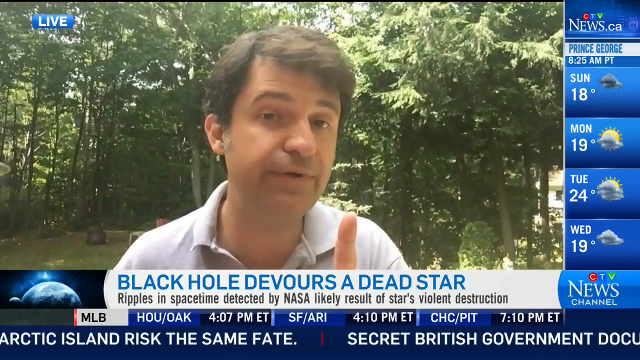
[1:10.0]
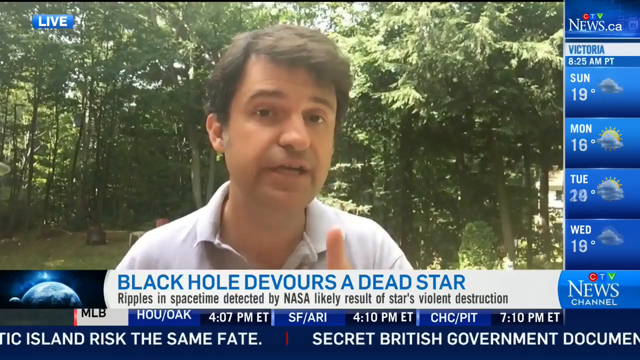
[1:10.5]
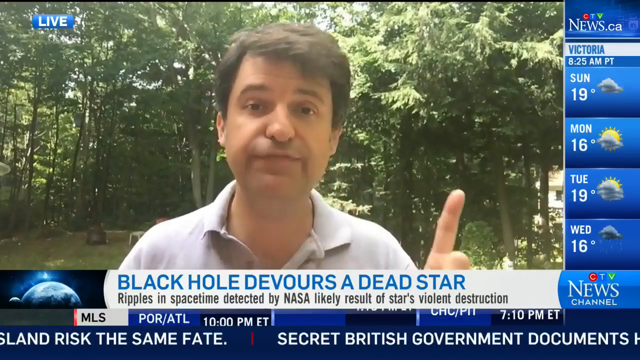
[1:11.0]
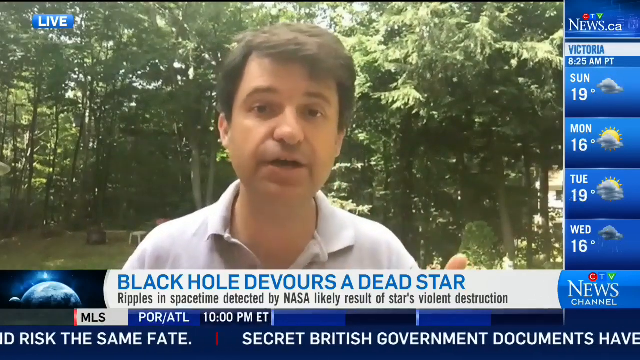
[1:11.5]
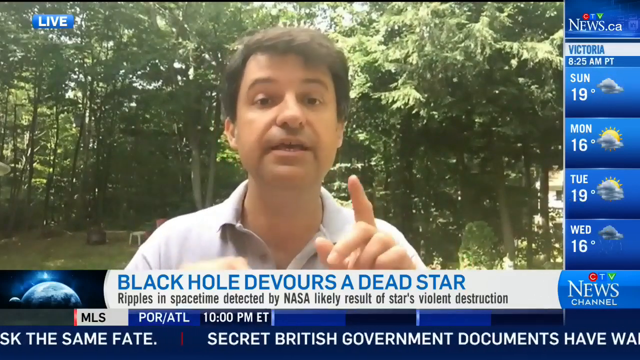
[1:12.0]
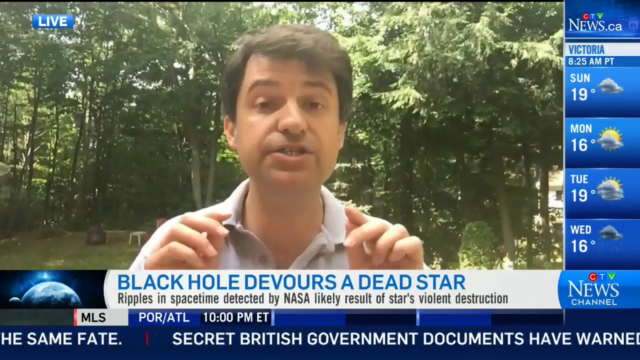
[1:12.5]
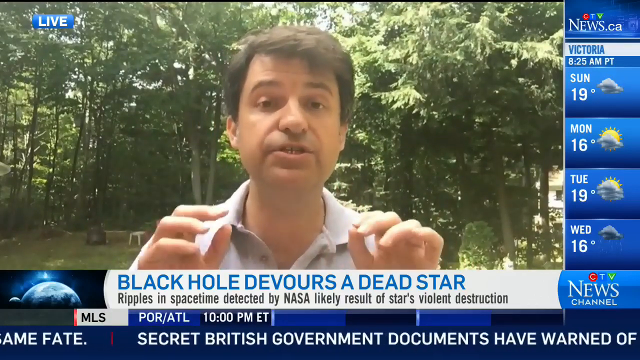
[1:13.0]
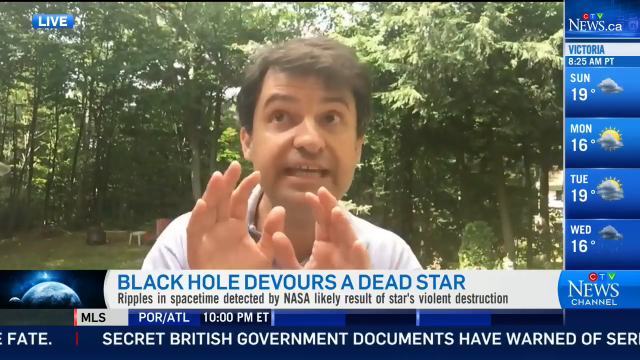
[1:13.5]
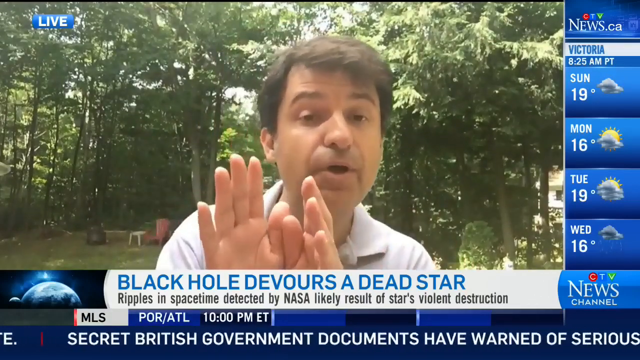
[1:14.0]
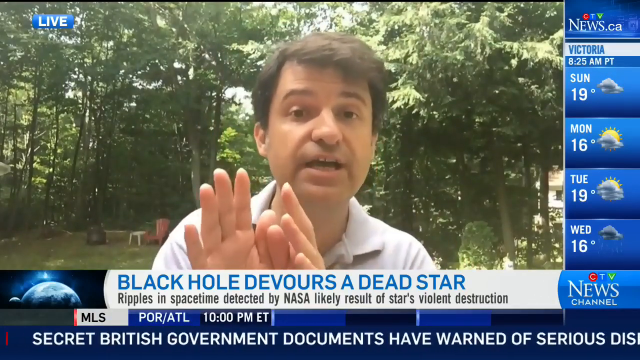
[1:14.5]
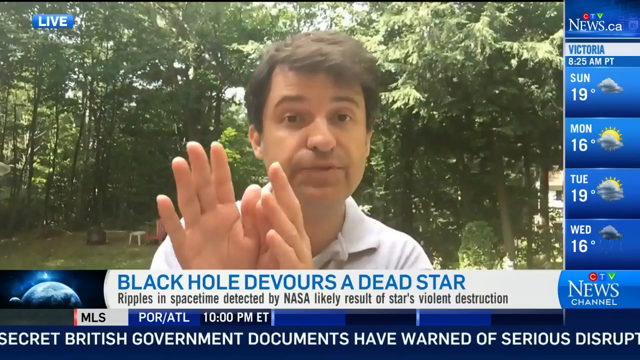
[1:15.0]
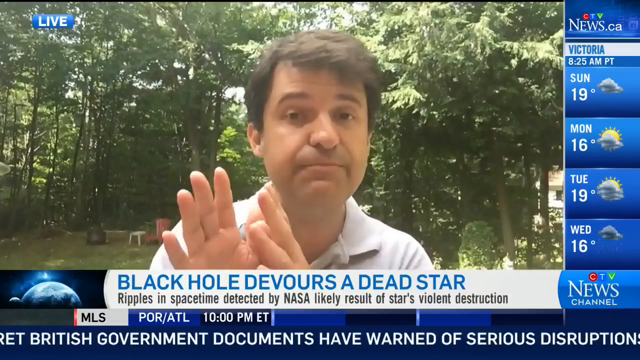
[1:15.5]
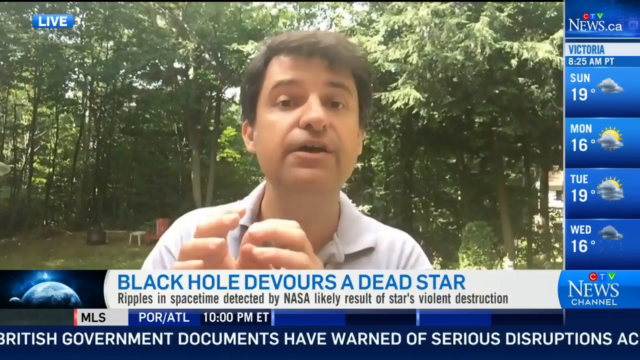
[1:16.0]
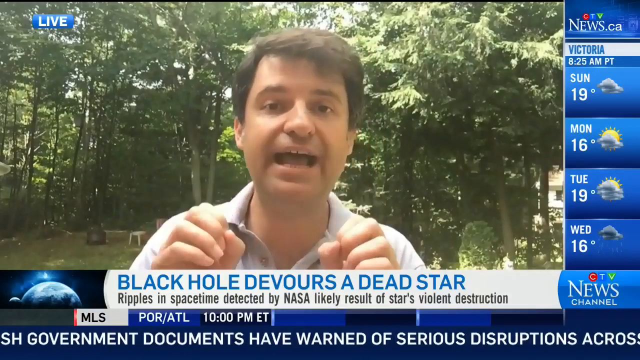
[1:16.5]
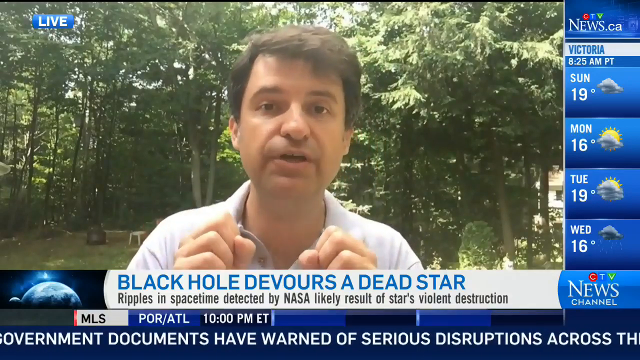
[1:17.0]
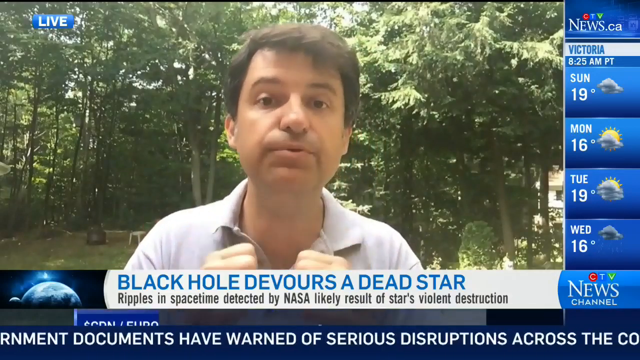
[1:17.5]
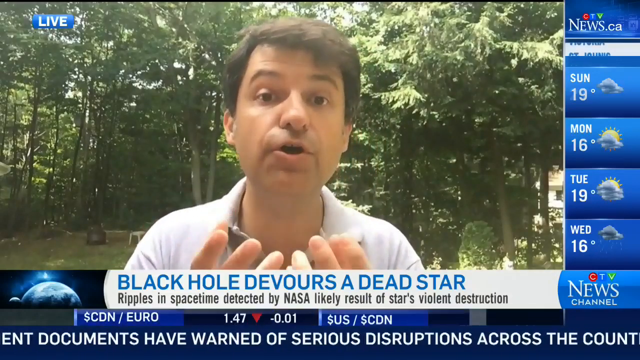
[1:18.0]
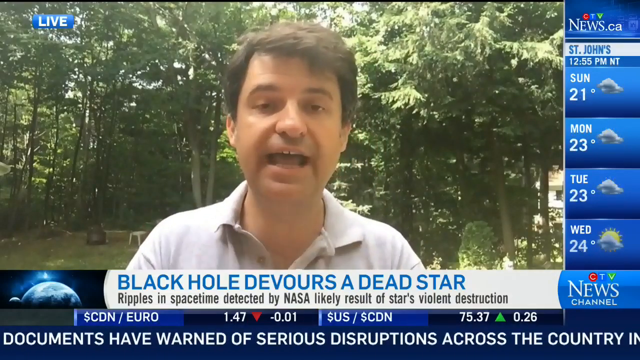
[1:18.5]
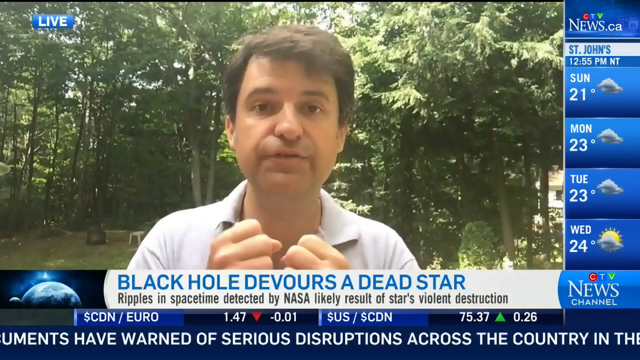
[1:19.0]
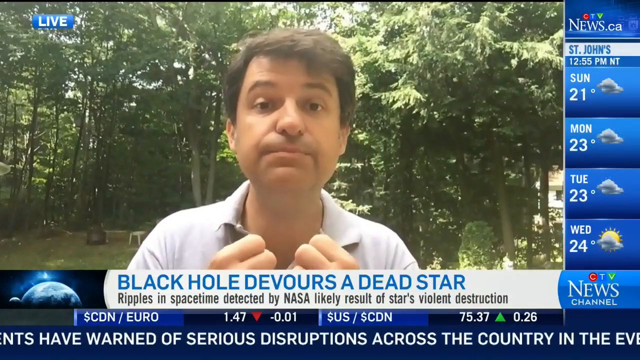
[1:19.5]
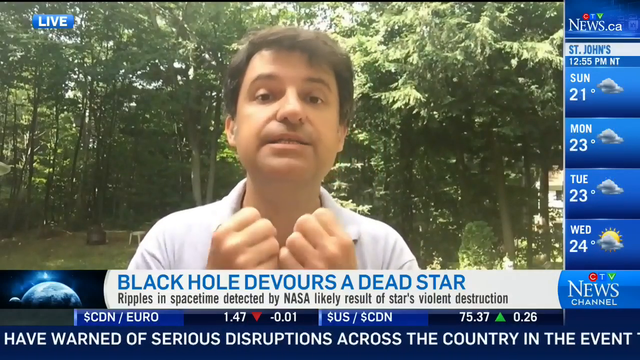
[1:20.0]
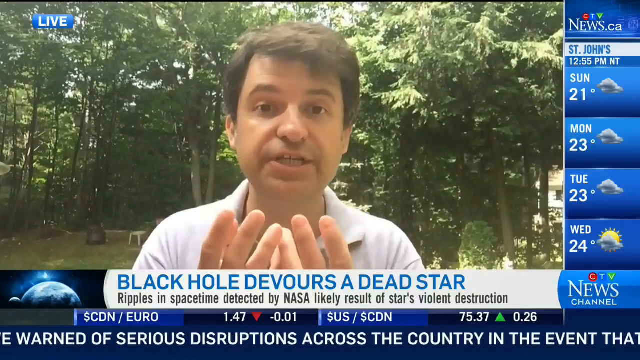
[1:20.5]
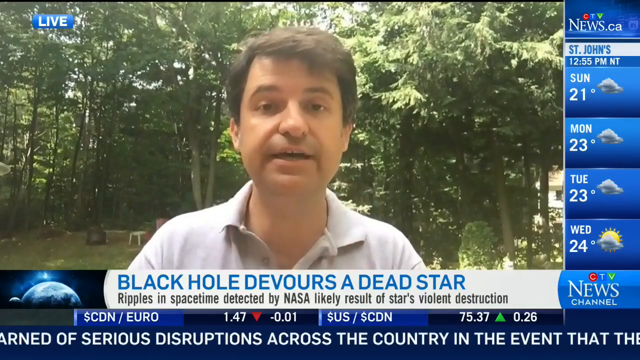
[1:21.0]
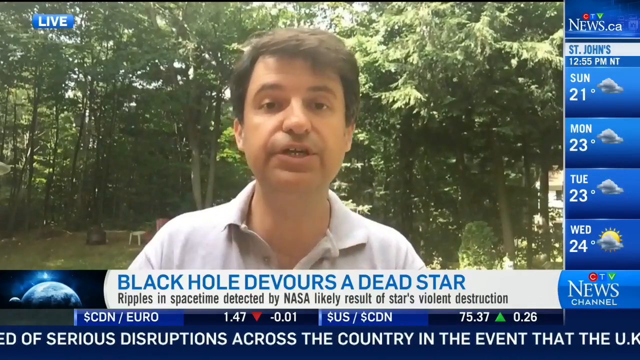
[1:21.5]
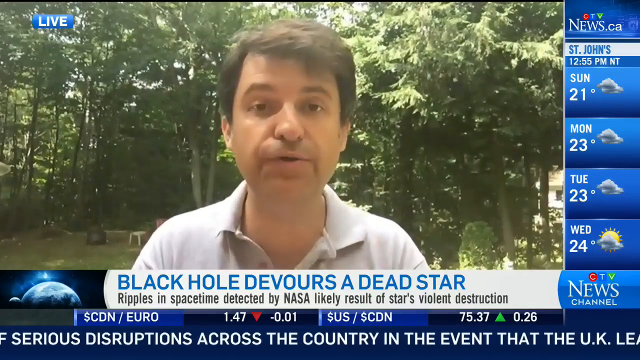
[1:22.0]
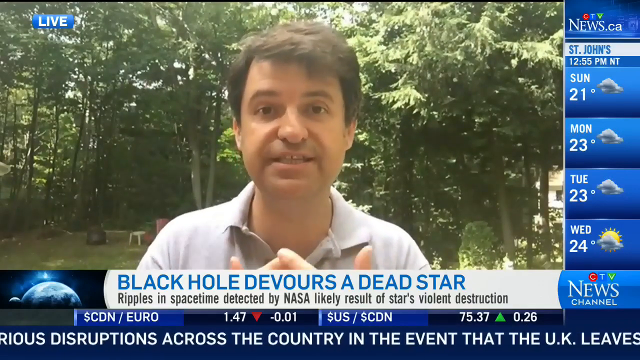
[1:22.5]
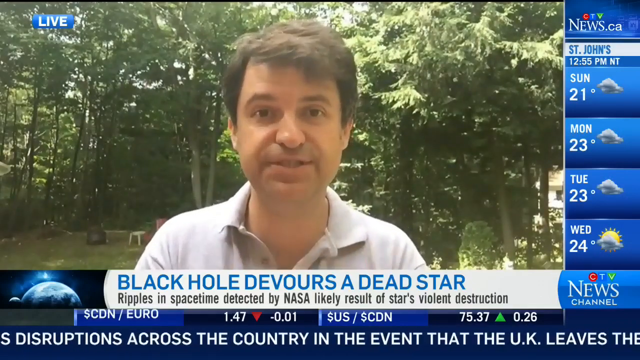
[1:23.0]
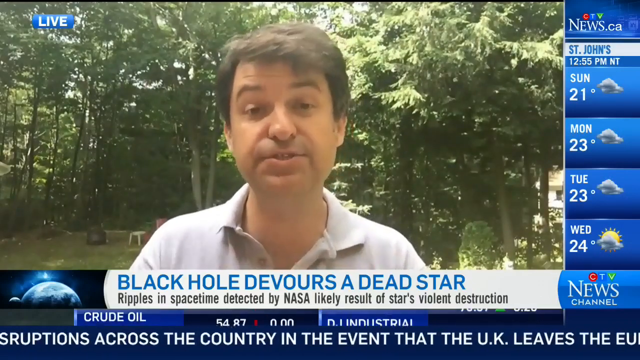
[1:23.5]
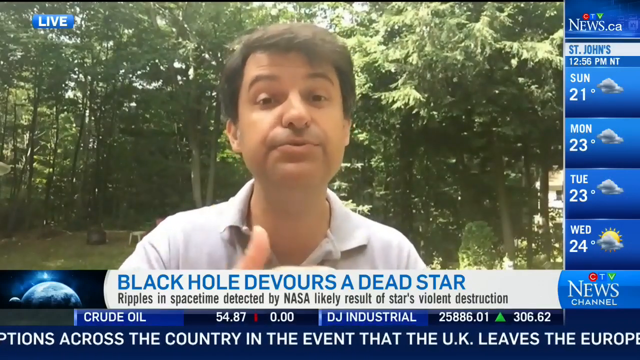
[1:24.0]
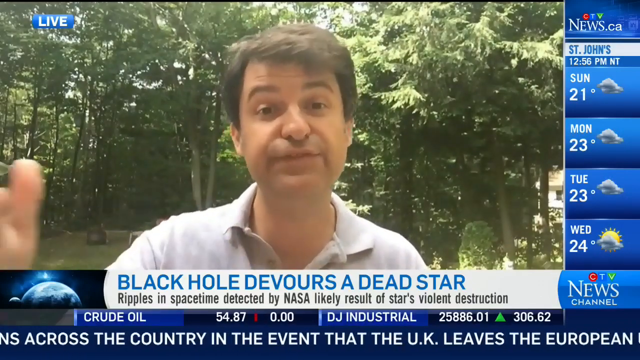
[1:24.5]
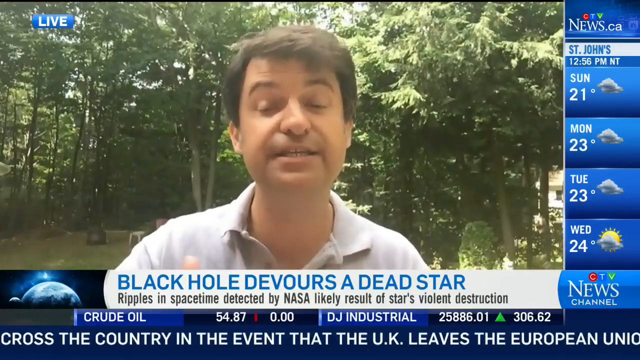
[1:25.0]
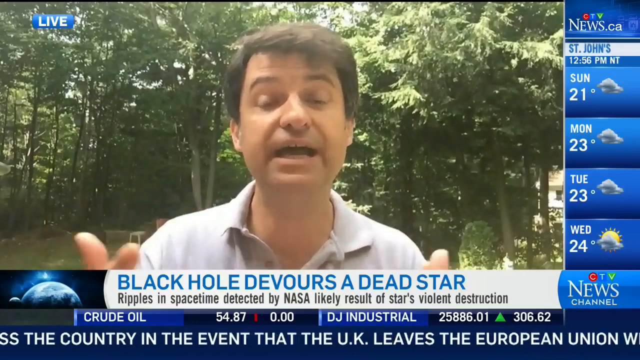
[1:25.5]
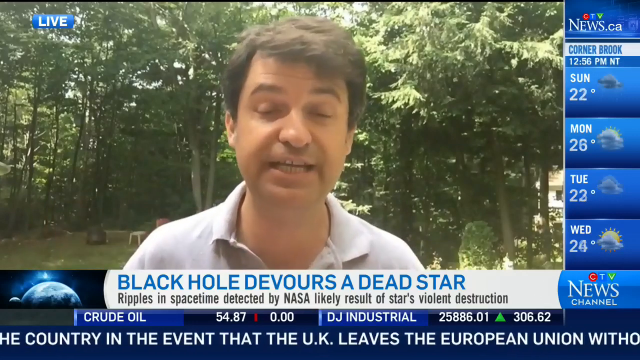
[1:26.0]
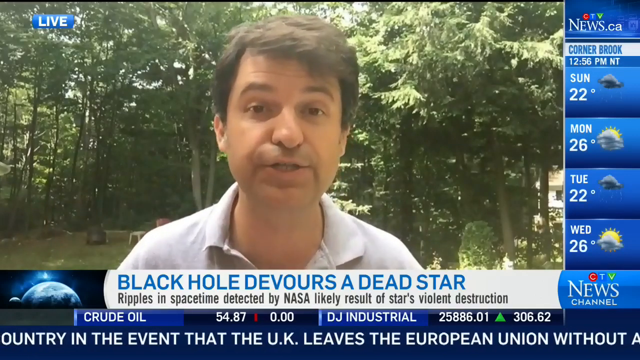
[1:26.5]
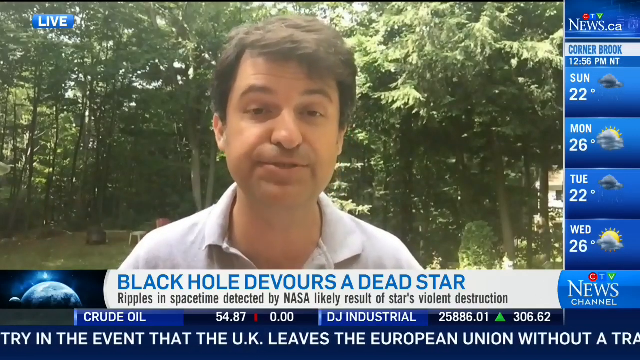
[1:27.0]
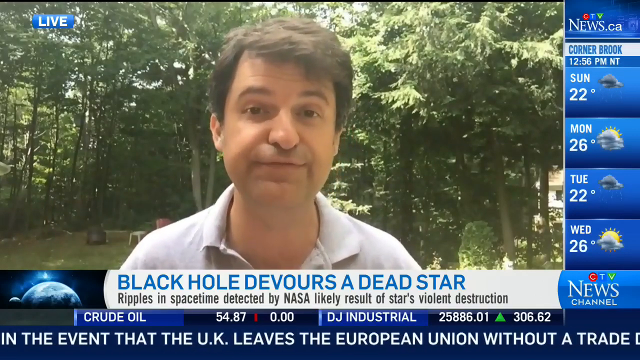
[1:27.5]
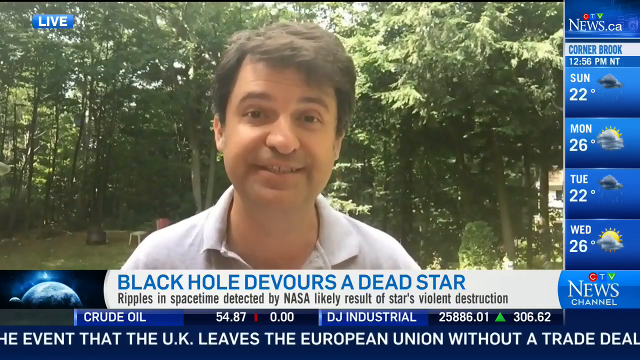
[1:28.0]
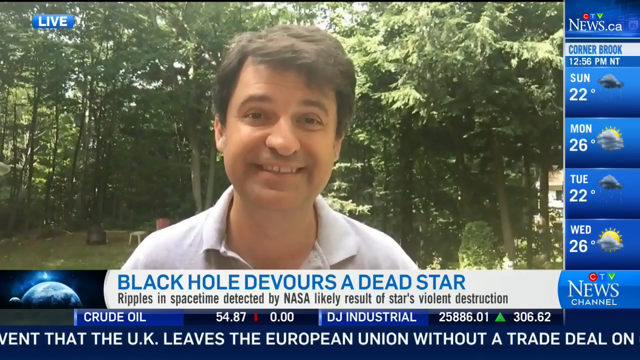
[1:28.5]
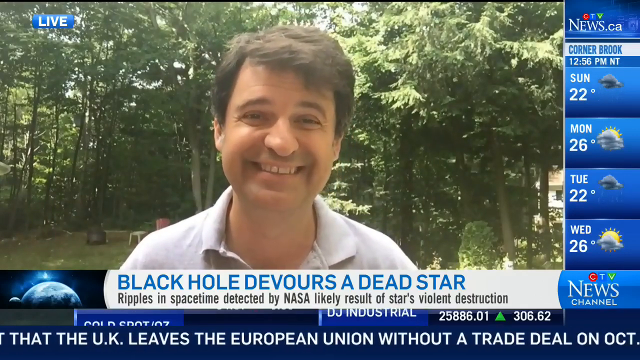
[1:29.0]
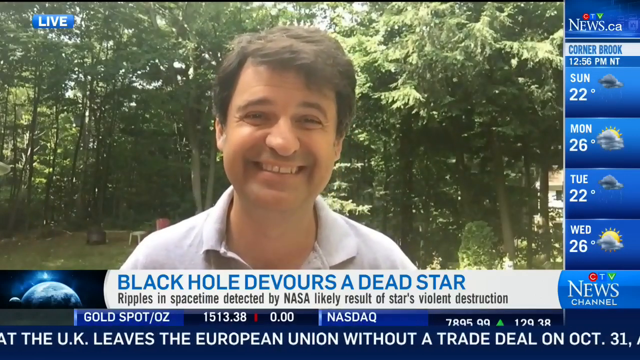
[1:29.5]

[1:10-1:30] The man continues explaining with gestures. He seems to start by pointing with one finger as if making a one, then opens his hands while looking toward the sky, closes his hands into a kind of fist, and opens the fist again. He then puts his hands together and opens them up in front of him. He smiles and laughs a little, and the video briefly shows the news anchor he has been talking to.